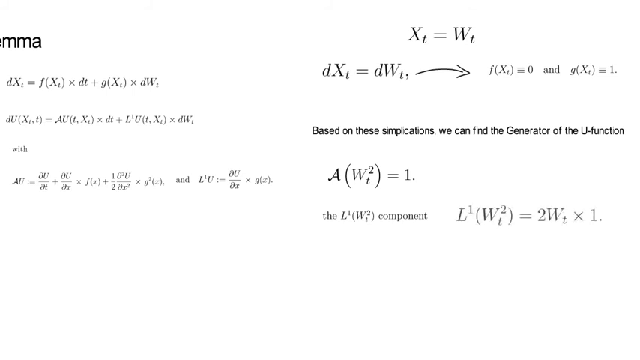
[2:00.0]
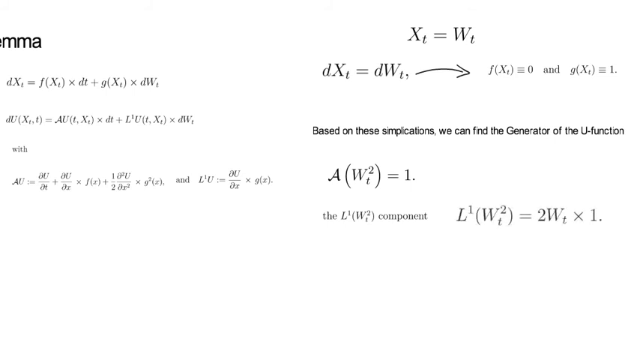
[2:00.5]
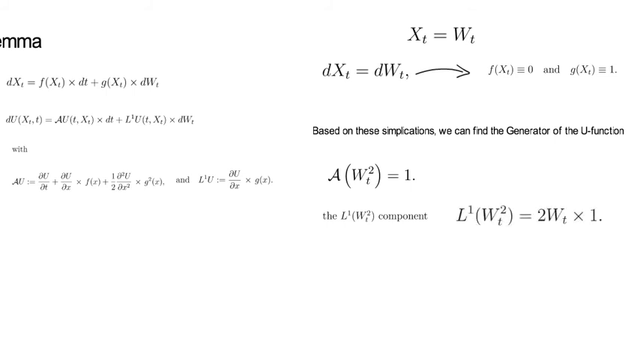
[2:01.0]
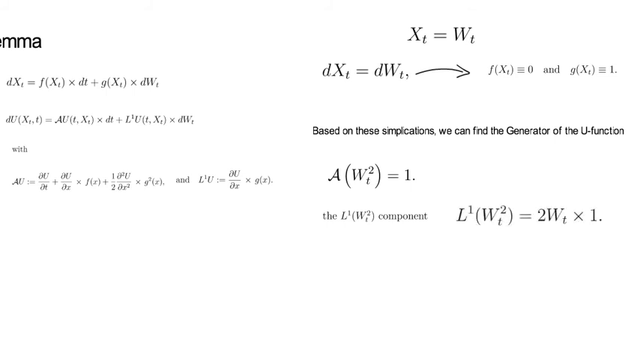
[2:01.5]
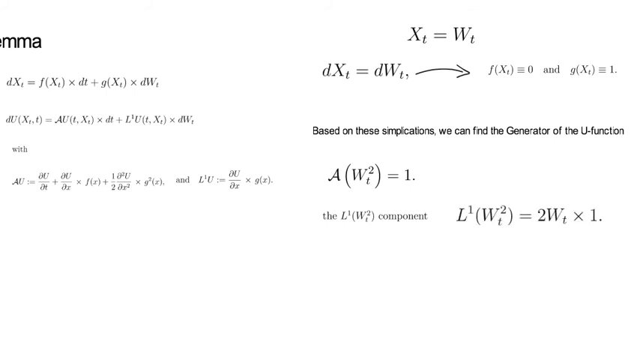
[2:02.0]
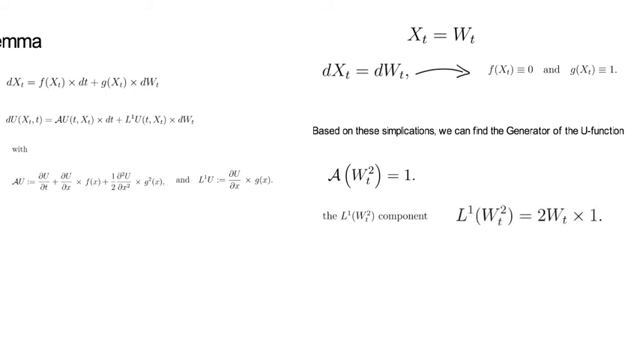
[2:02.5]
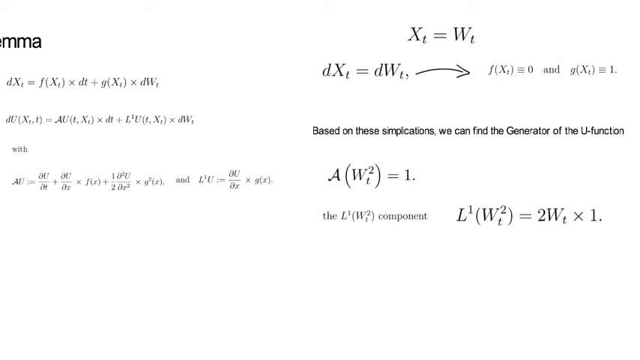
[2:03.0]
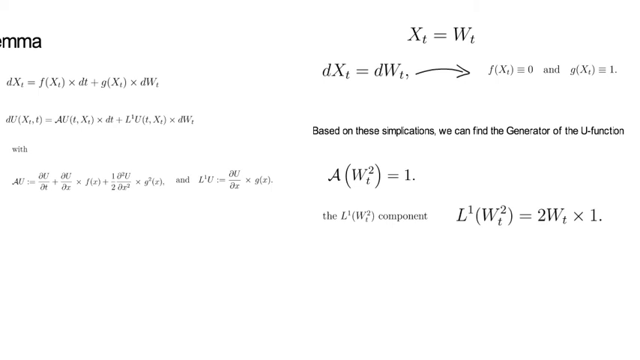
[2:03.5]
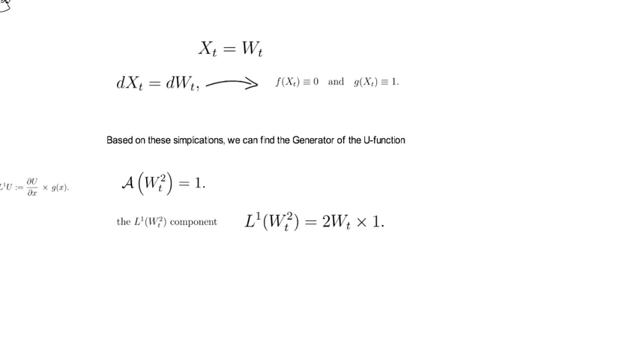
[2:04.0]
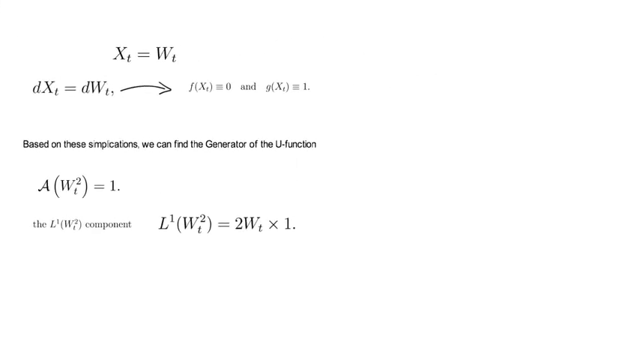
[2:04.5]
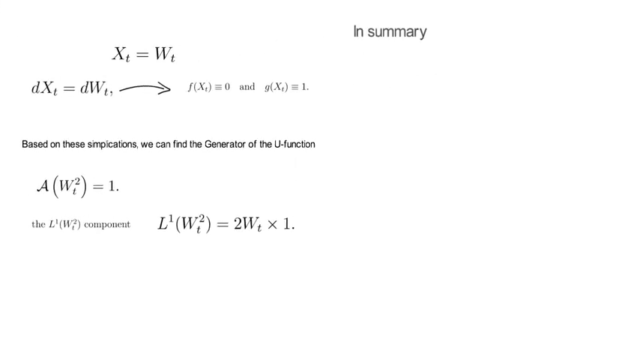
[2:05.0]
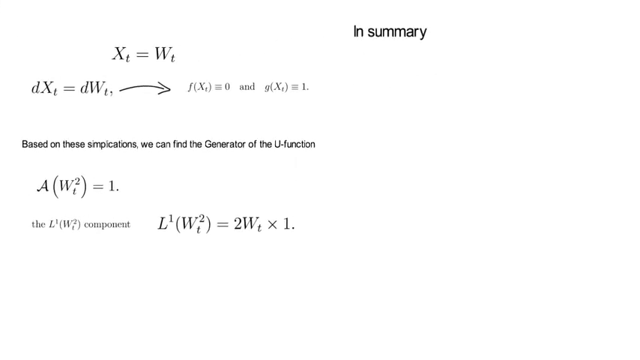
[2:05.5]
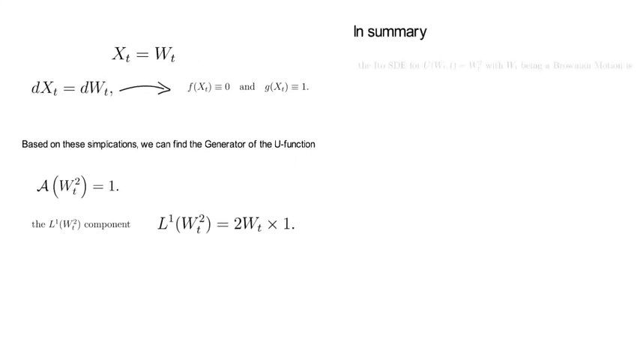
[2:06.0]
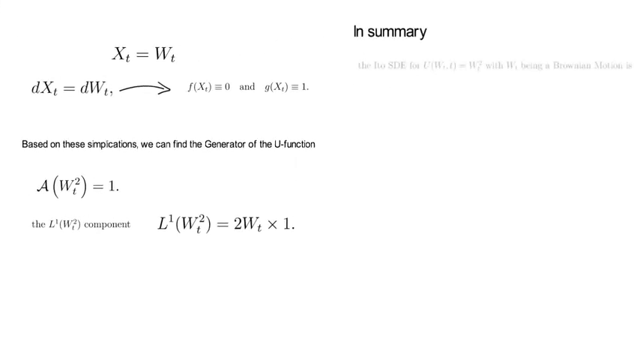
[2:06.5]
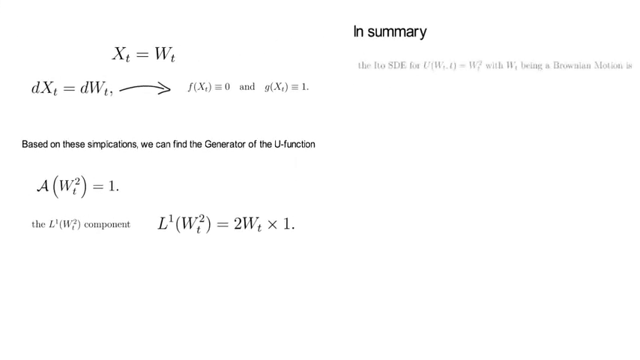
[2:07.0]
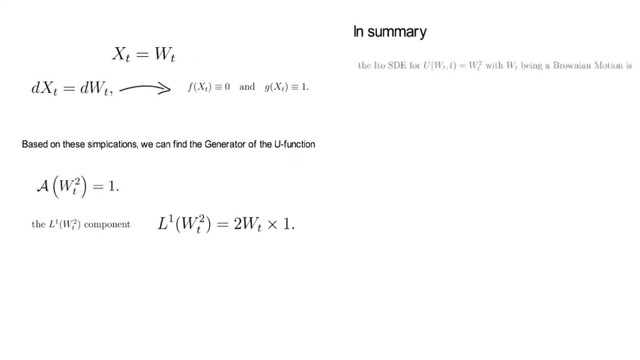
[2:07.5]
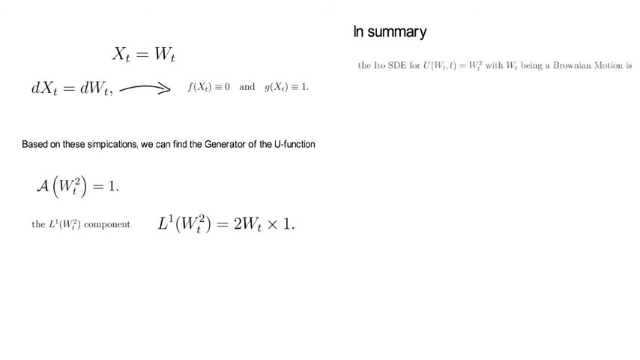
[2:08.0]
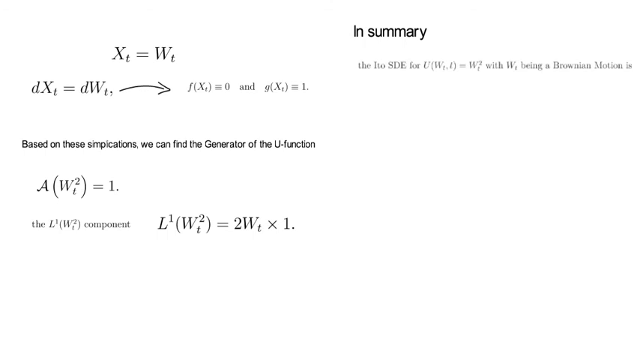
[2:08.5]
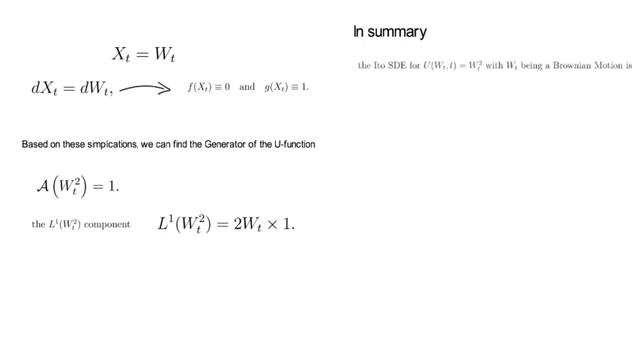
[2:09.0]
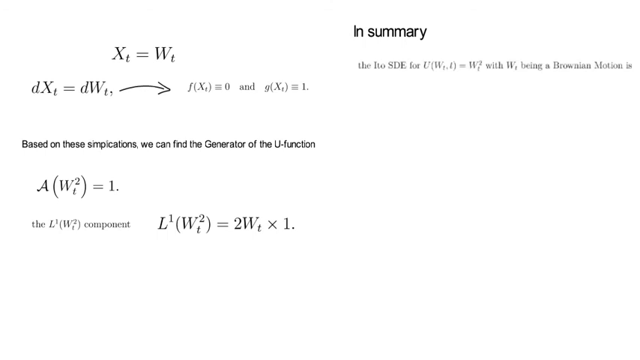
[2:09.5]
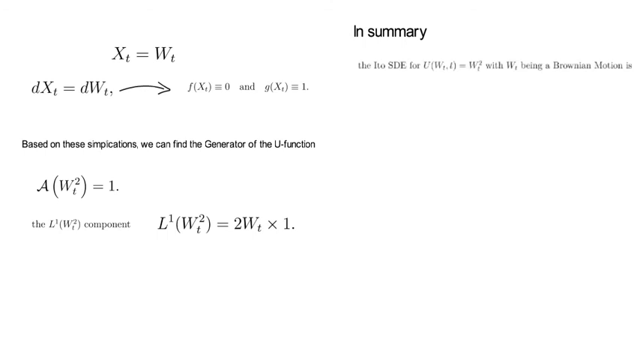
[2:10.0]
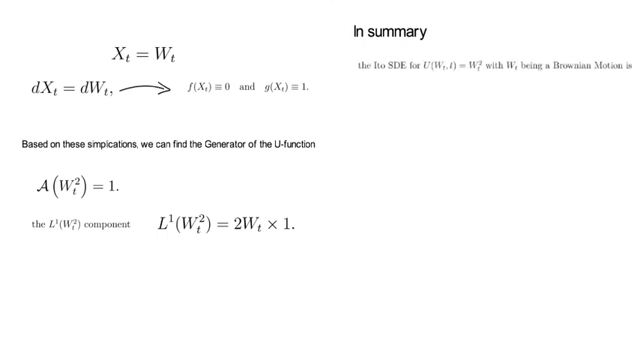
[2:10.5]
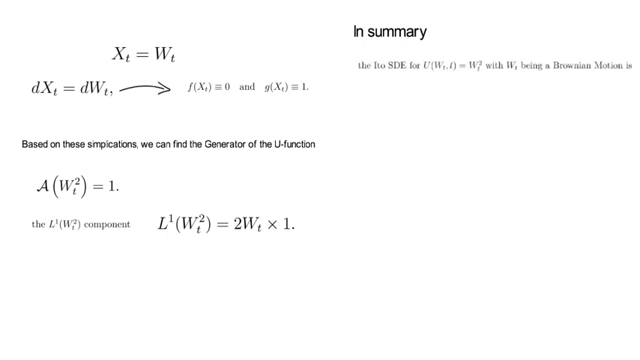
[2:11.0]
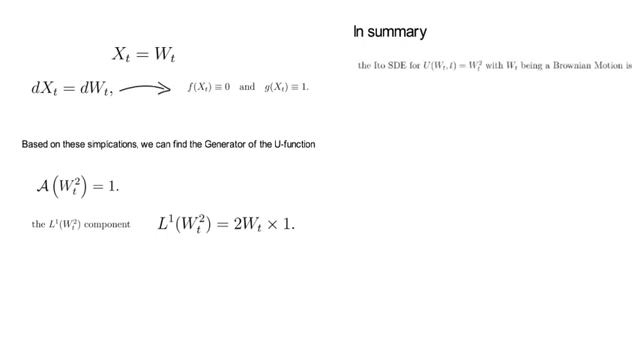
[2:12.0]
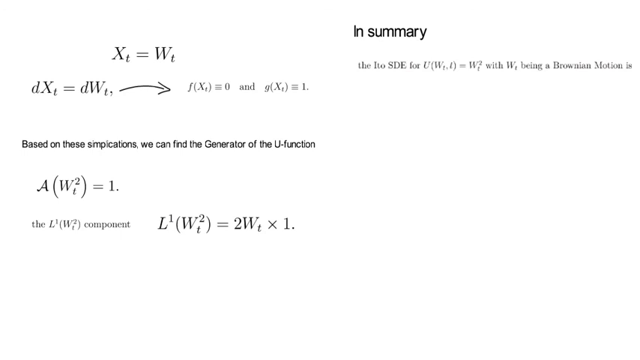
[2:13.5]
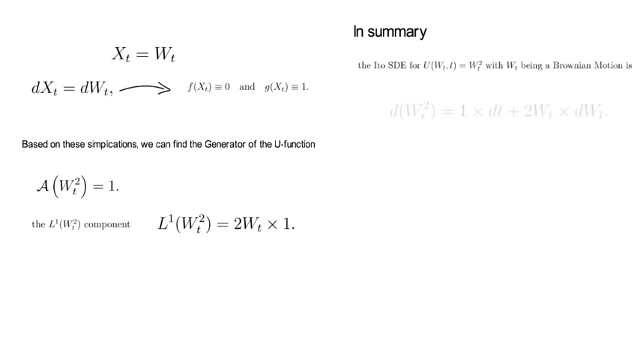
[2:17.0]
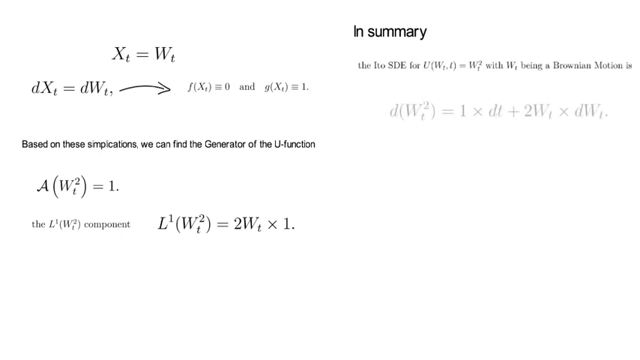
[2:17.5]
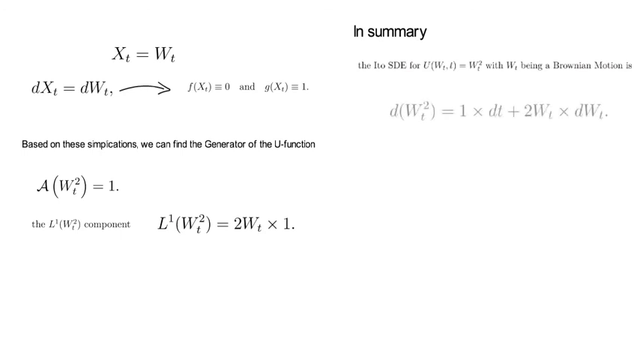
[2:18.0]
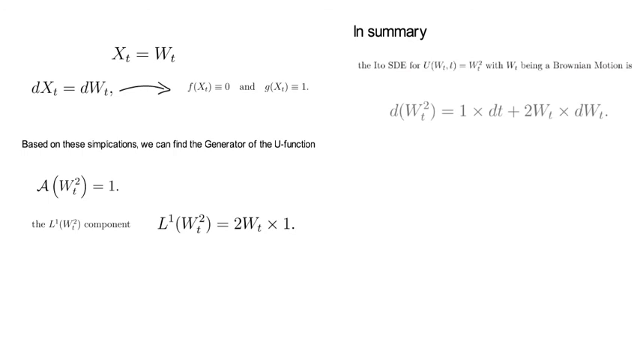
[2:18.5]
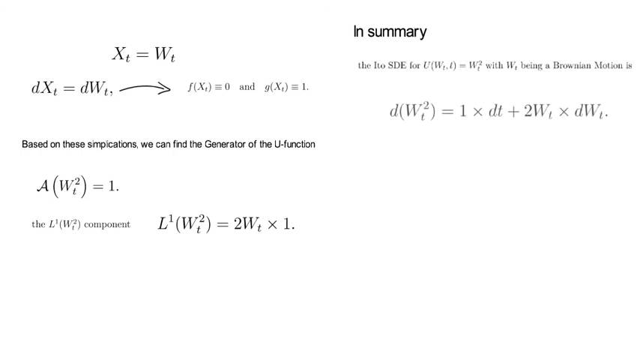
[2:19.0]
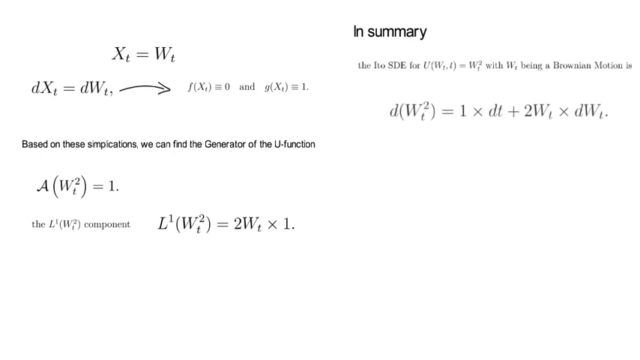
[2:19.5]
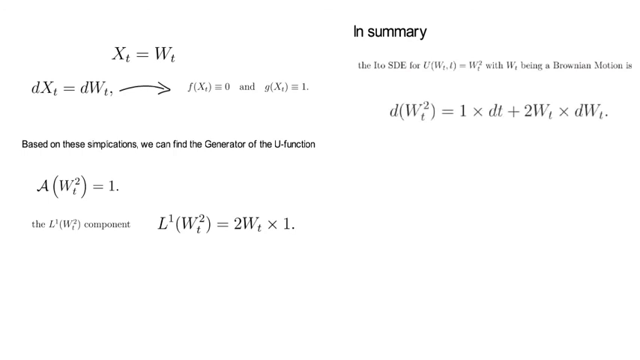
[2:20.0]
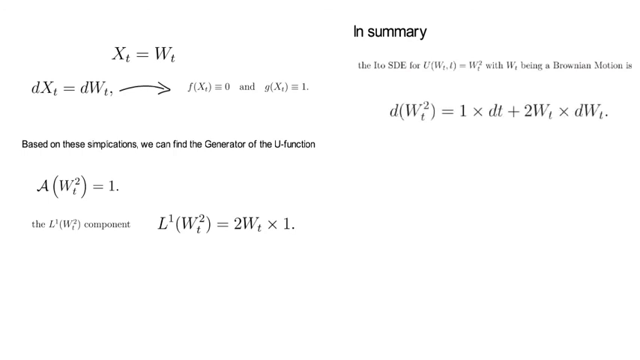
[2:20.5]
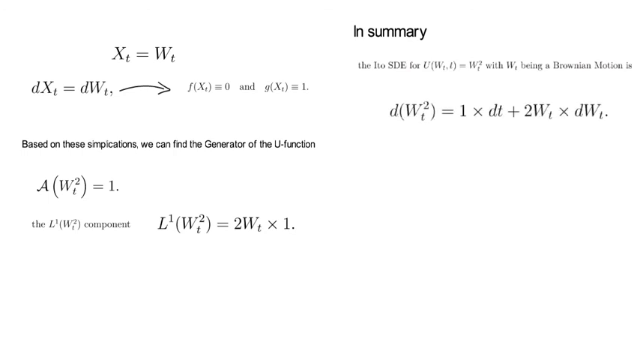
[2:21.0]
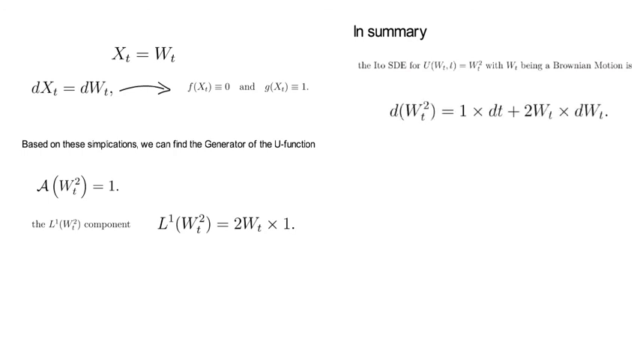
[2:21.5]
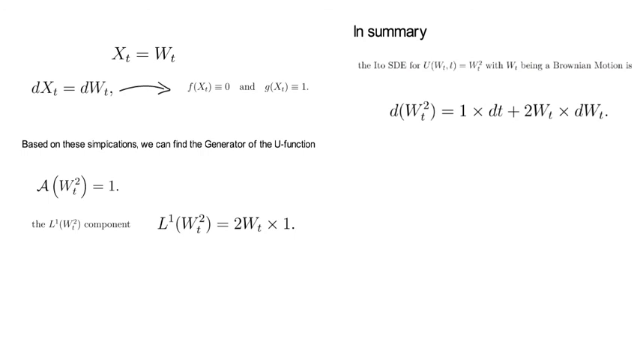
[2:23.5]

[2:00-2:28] On the final slide, the view moves further to the right. The left-side column fades out, the former right-side column moves to the left, and on the right a summary appears stating that, in summary, the LTOSD for u of W t and t equals W squared of t, with W being a Brownian motion, is d of W squared t equals 1 times d t plus 2 W t times d W t, followed by a dot. The left side shows x of t equals W of t at the top, with the text below it, "based on these simplifications, we can find the generator of the u function." The background remains the same consistent white.